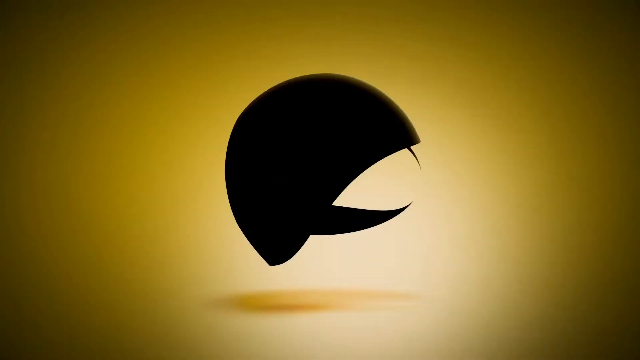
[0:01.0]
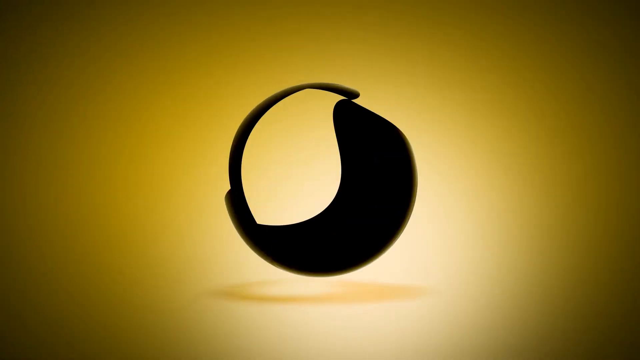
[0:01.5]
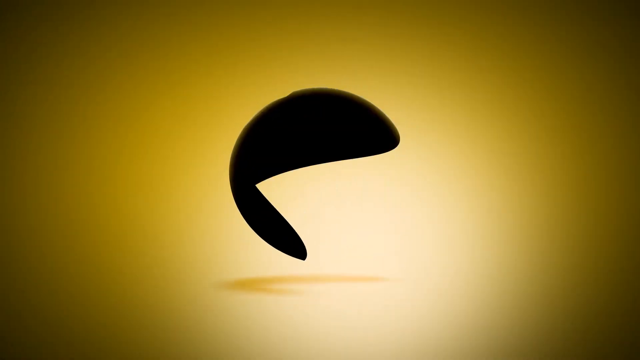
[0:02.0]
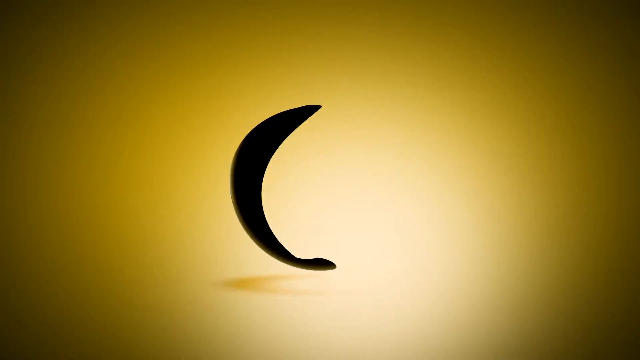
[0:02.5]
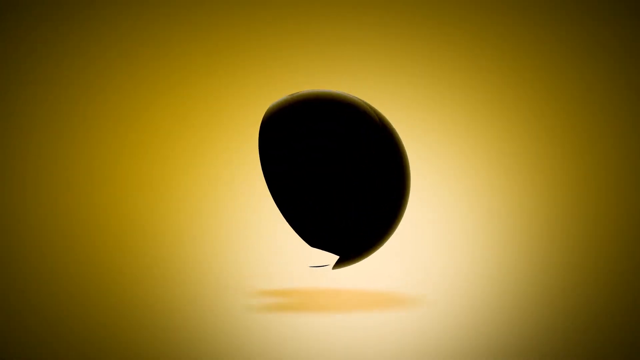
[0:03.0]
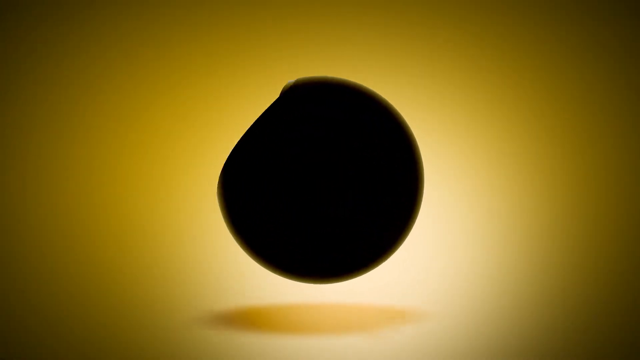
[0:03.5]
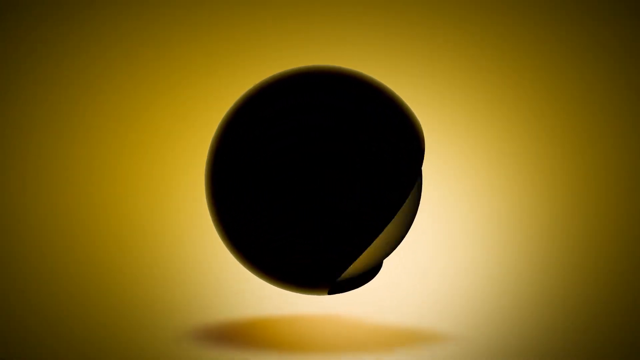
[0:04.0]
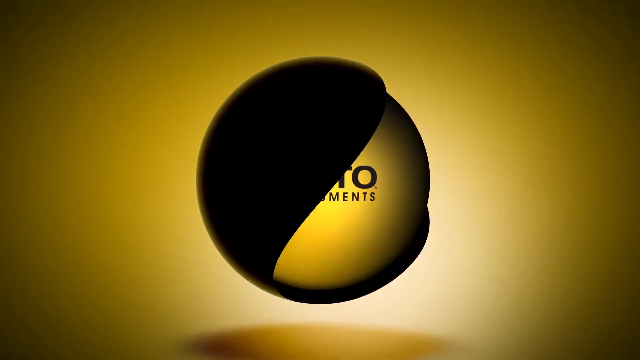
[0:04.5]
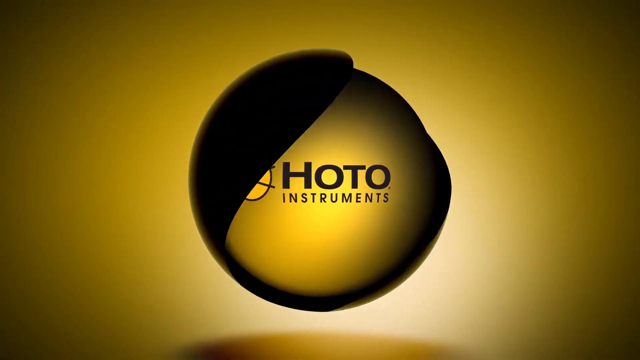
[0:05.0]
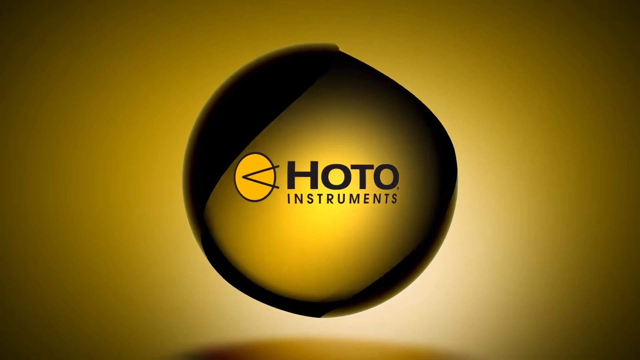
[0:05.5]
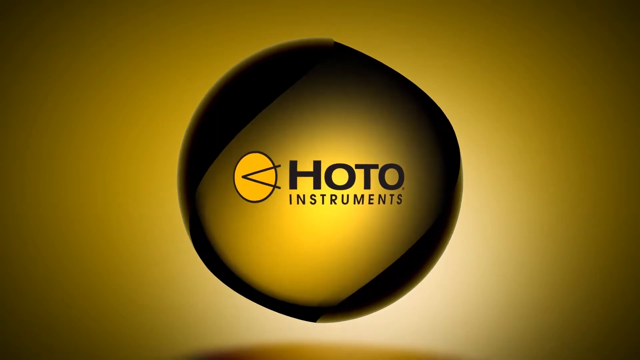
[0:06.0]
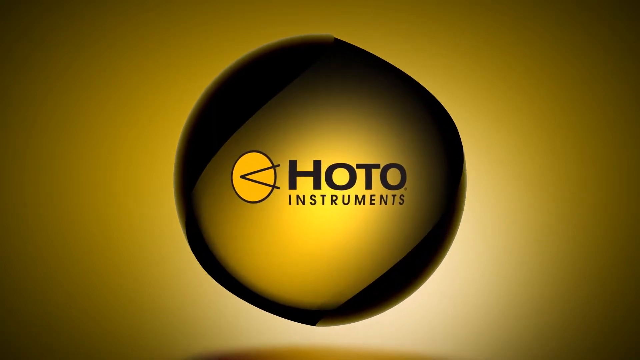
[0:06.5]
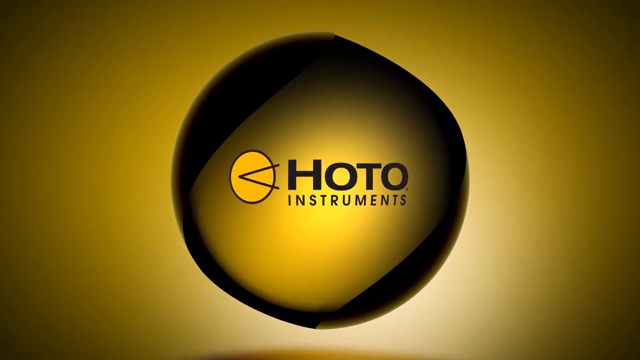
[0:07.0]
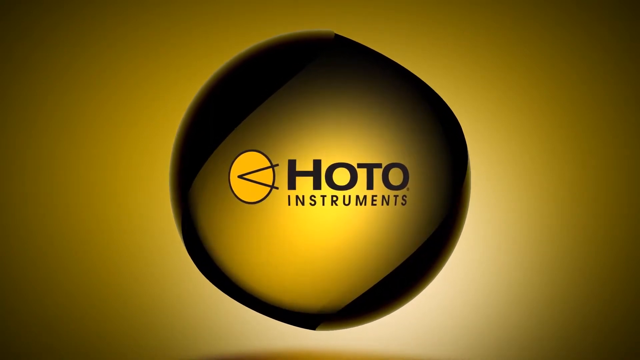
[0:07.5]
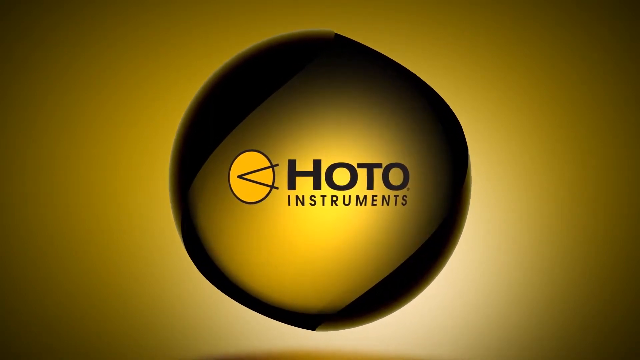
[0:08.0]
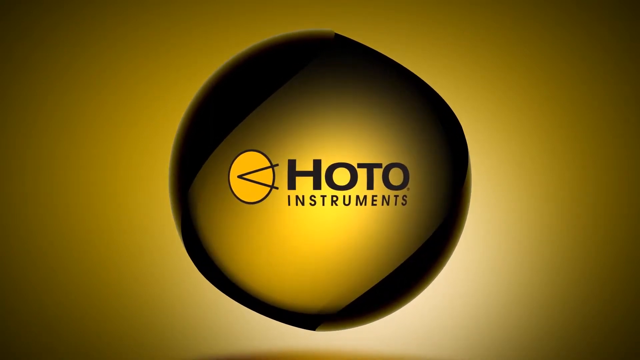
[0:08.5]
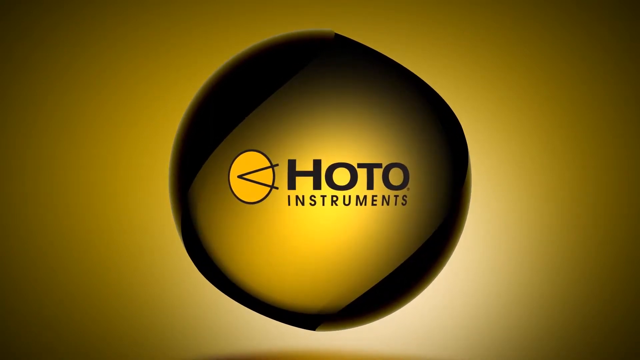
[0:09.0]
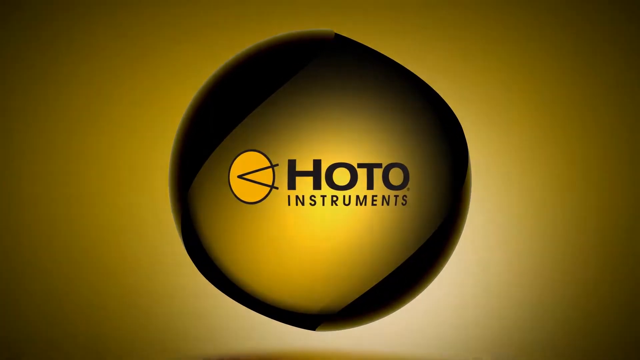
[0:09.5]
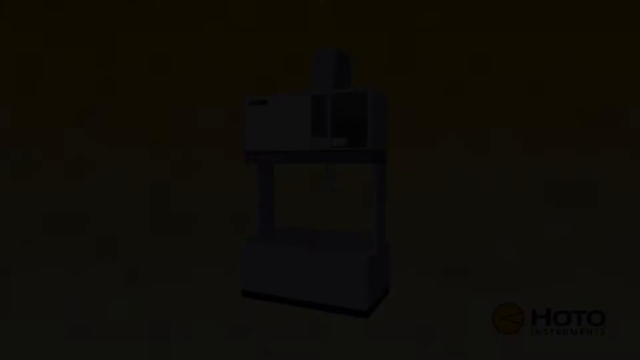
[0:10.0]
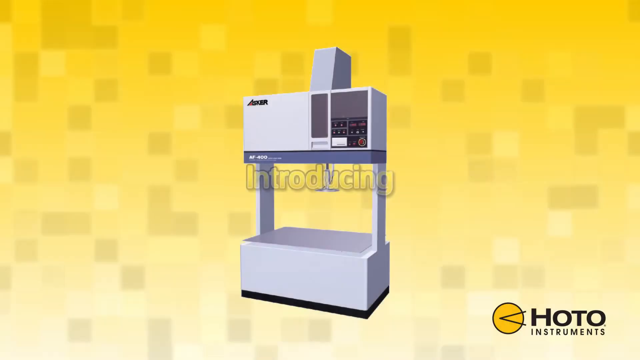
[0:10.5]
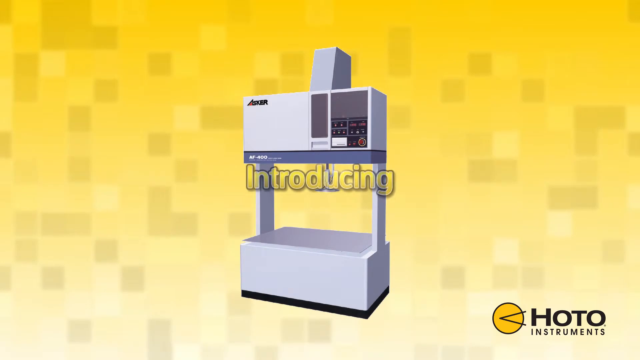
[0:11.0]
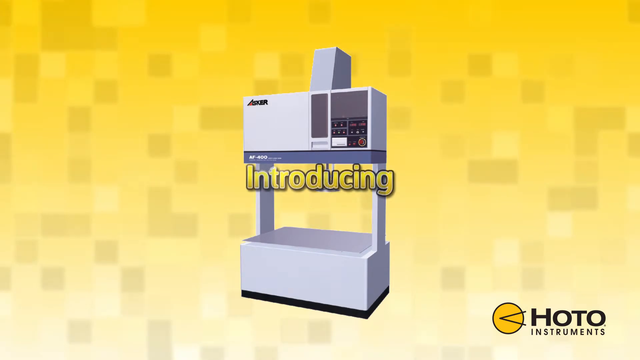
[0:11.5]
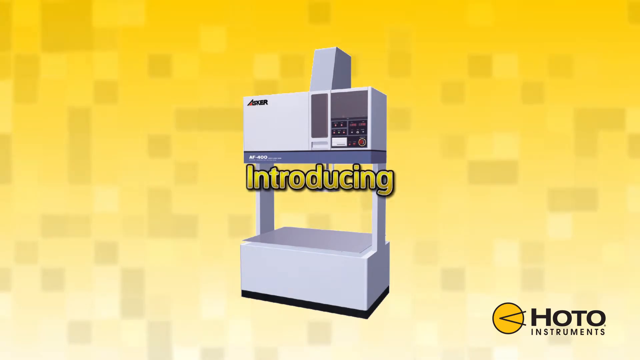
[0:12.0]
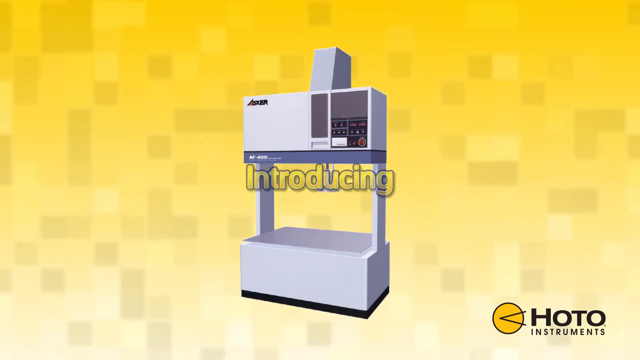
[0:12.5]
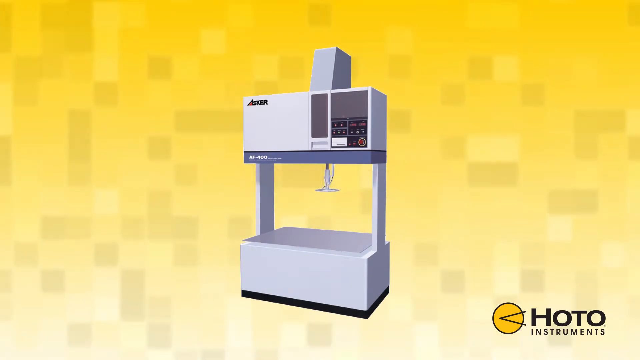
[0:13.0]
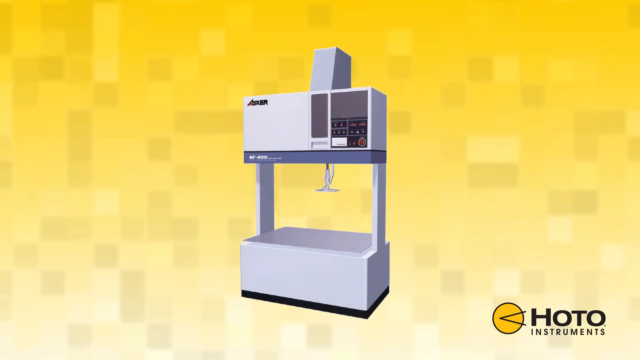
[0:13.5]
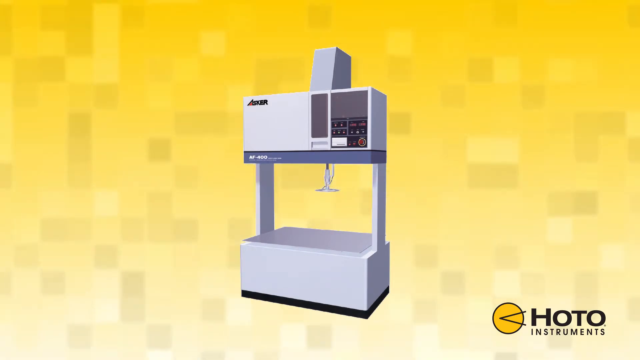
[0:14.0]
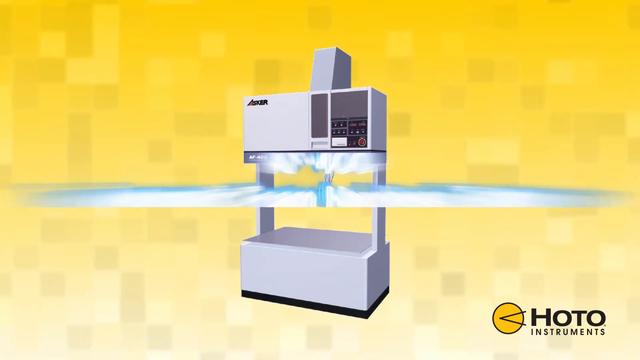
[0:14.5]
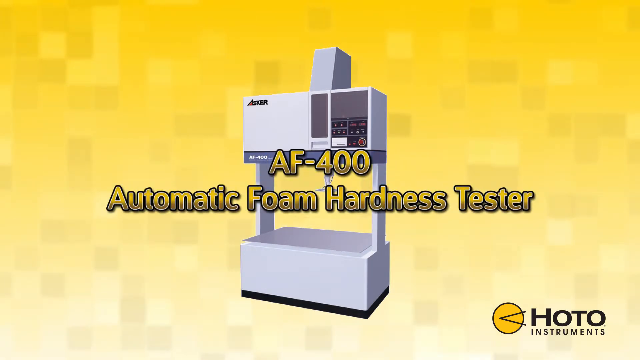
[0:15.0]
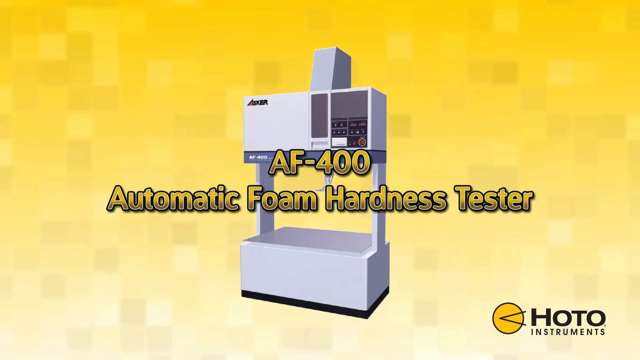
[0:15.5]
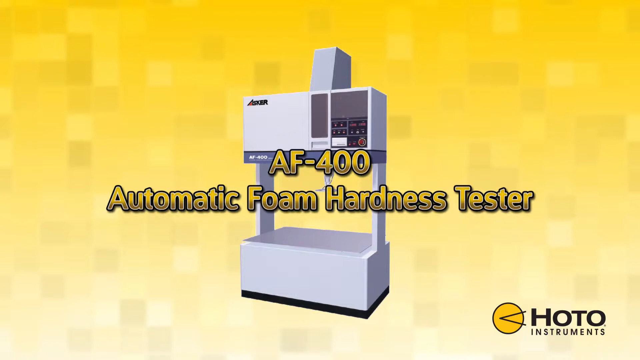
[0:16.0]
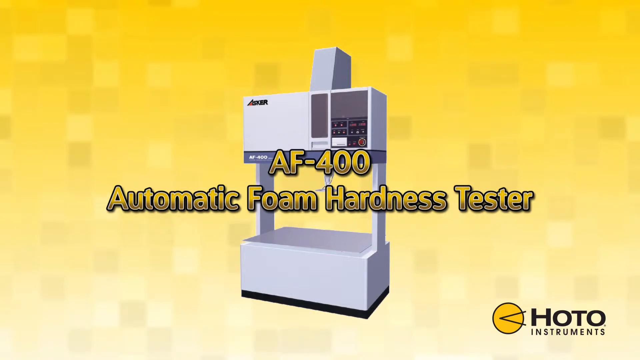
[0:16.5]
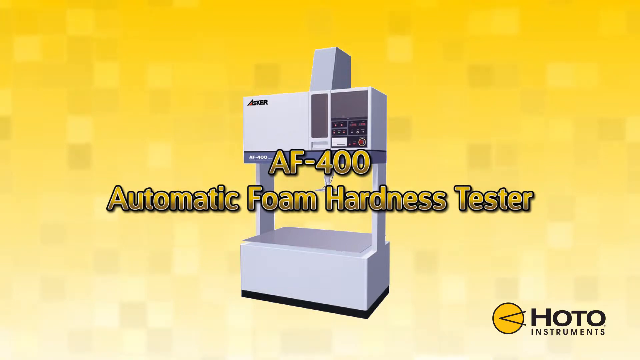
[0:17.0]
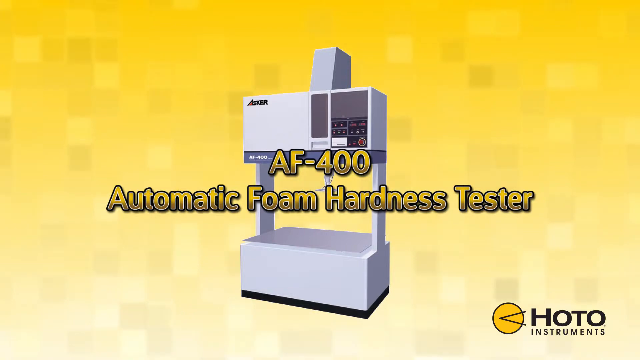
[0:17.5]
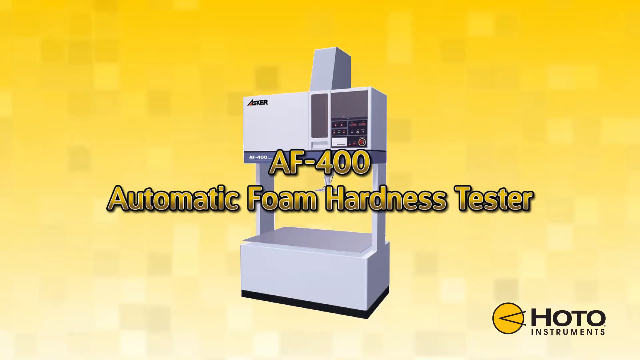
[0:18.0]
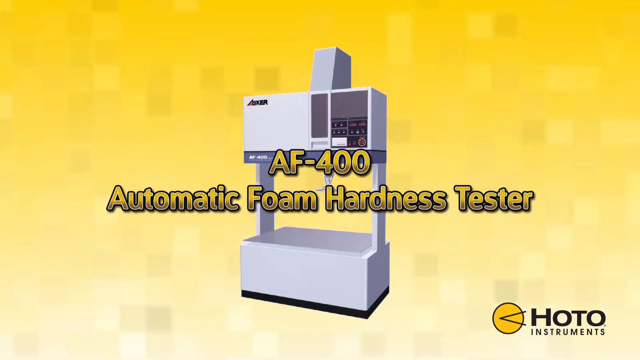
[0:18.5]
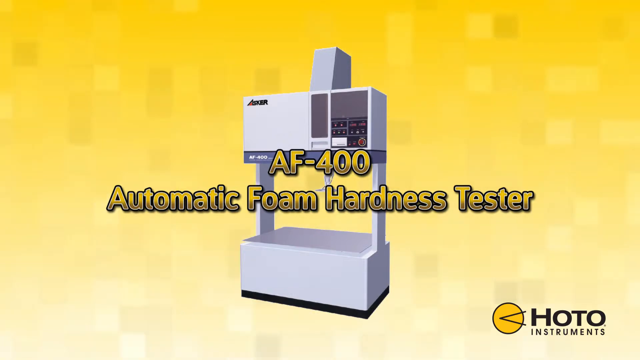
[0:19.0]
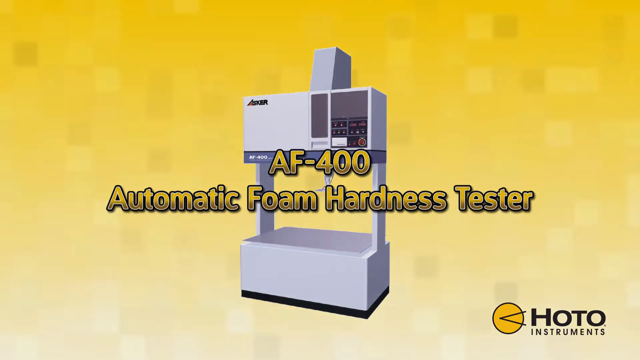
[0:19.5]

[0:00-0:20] A rolling half ball keeps spinning and comes together with a black aura around it, for HOTO Instruments. The HOTO Instruments logo then appears; it looks like a greater-than symbol. The background is simple: yellow, almost like a sun aura, with black around the circle, and the initial screen is yellow but blackish out on the sides. What seems to be the main screen follows, for a foam tester, showing a pretty big piece of machinery. The slide is basic. Its background is pixelated, almost like Minecraft; at the top it is a slightly darker yellow, and the yellow pixelation gets darker and darker going down the screen. Little is shown of the machine beyond the picture of it, and it looks a little complicated.